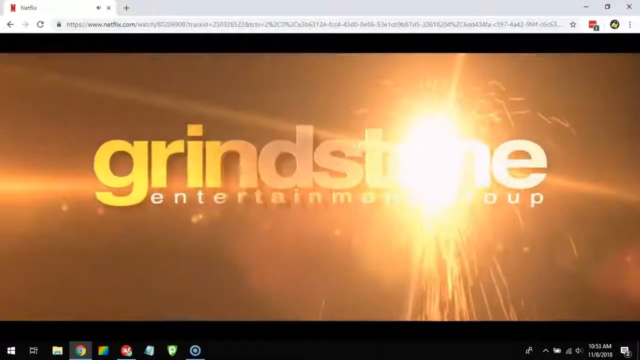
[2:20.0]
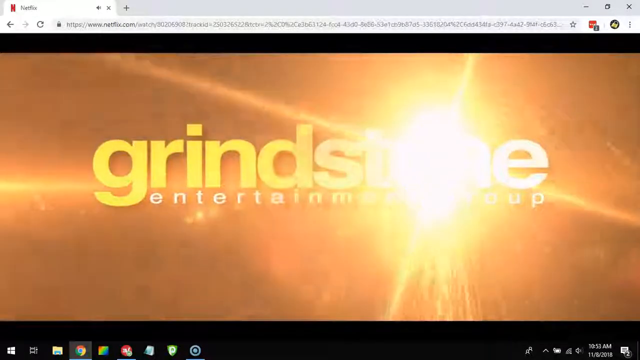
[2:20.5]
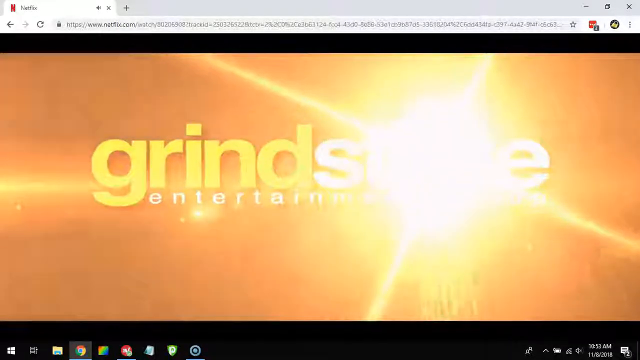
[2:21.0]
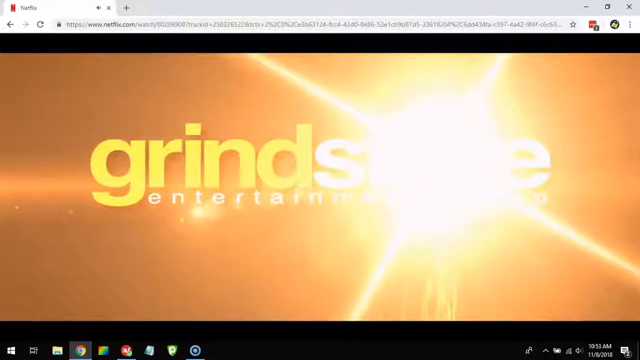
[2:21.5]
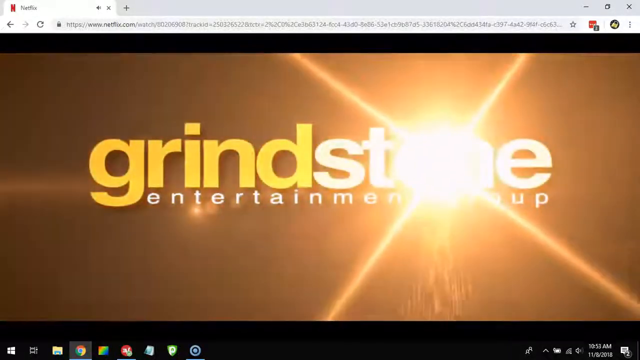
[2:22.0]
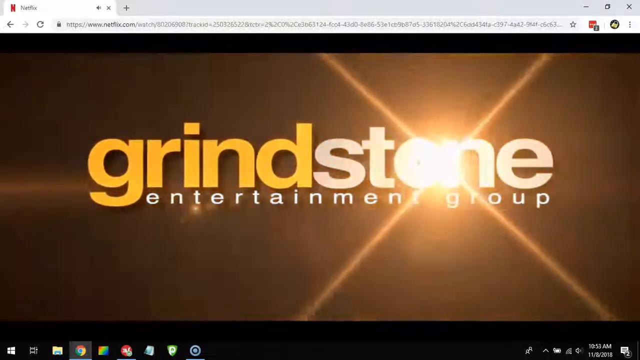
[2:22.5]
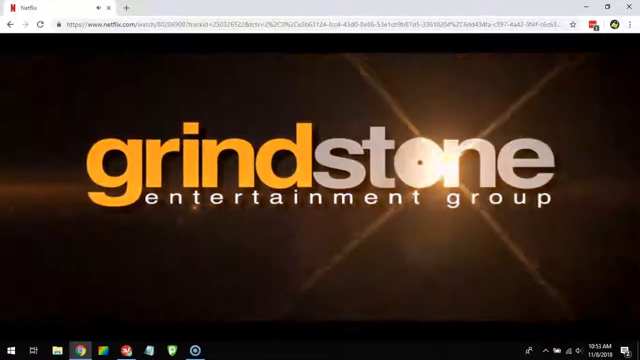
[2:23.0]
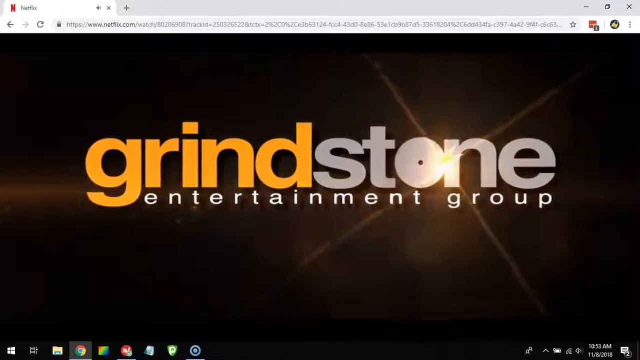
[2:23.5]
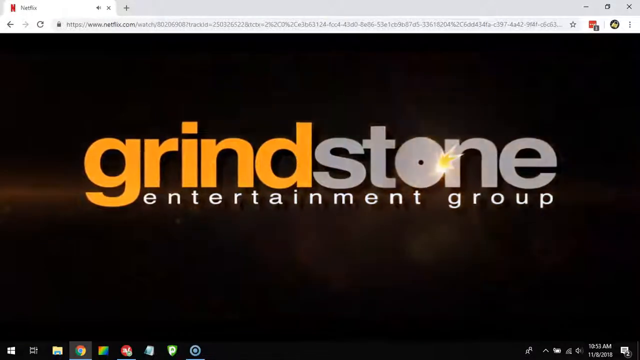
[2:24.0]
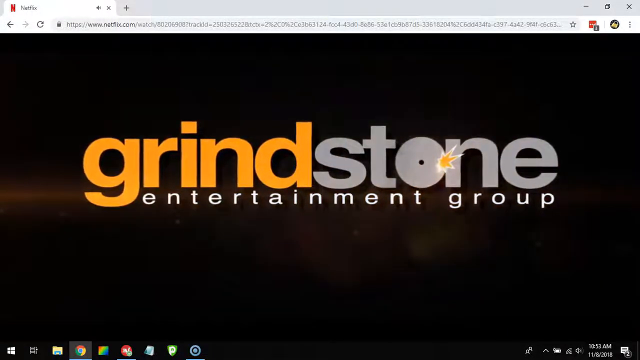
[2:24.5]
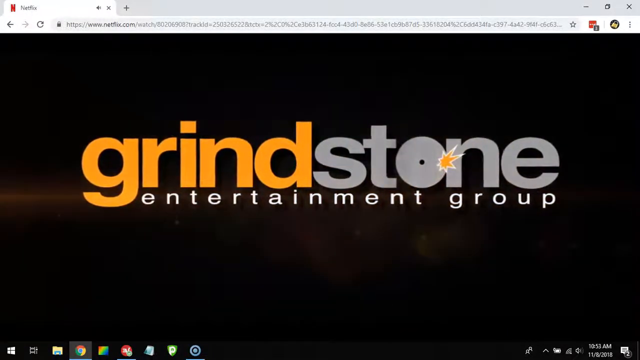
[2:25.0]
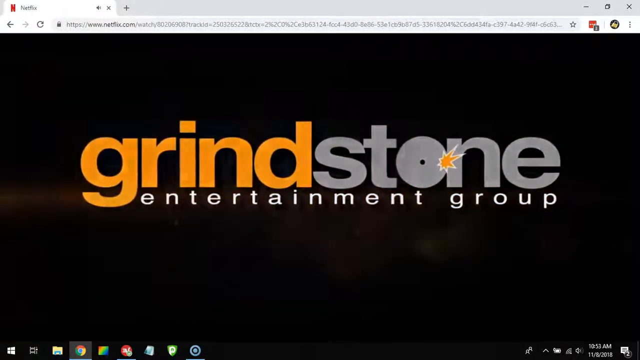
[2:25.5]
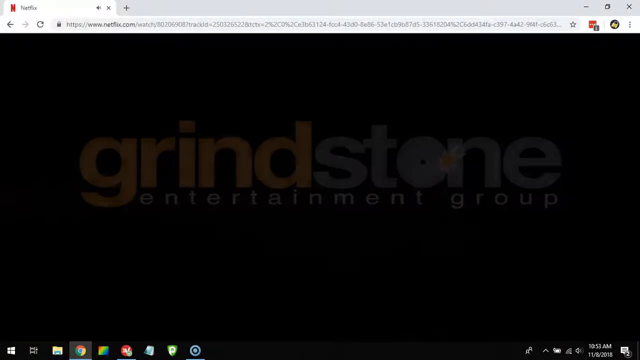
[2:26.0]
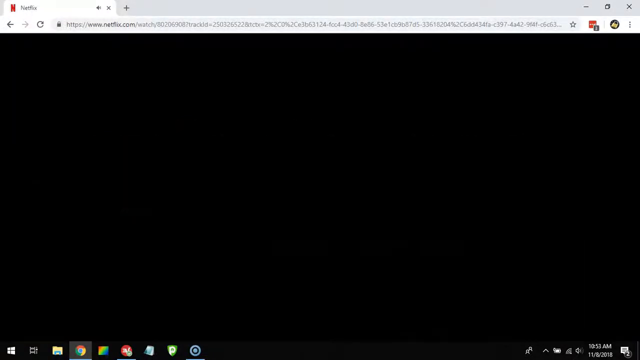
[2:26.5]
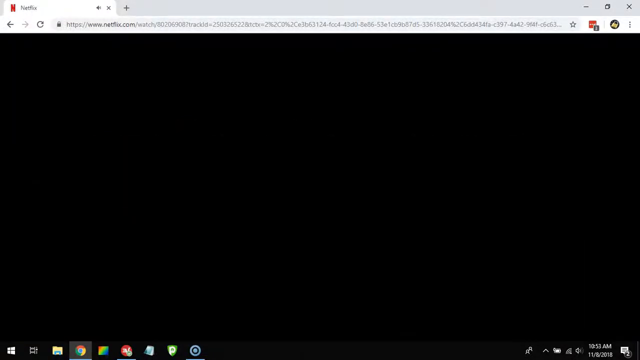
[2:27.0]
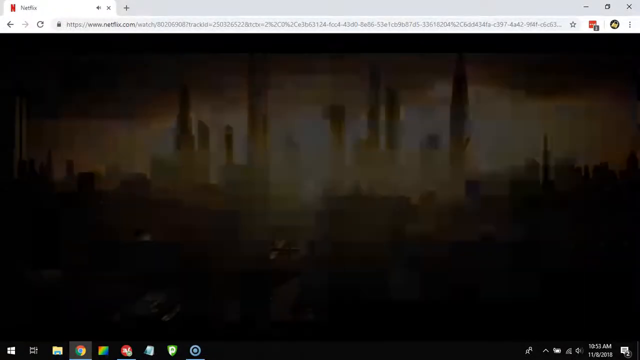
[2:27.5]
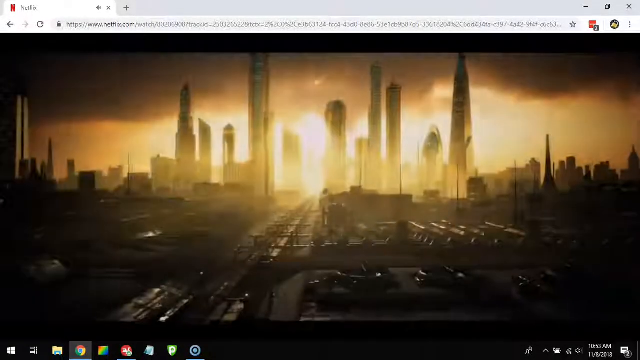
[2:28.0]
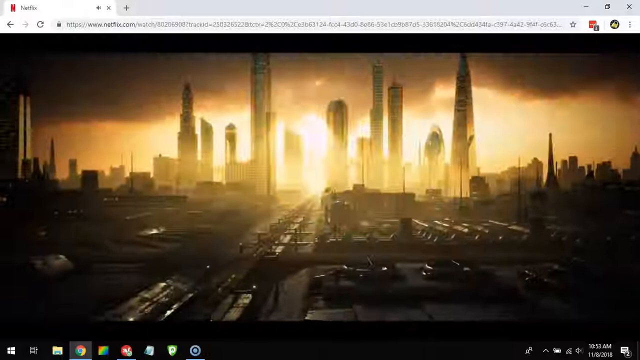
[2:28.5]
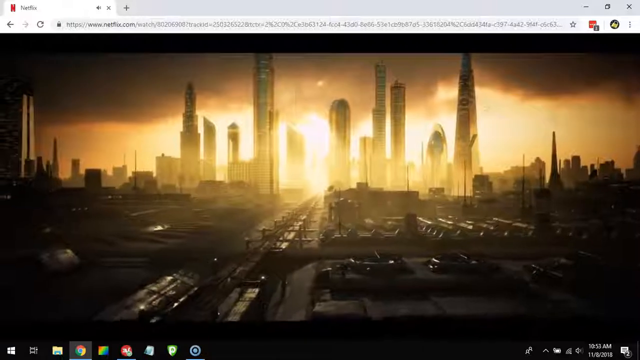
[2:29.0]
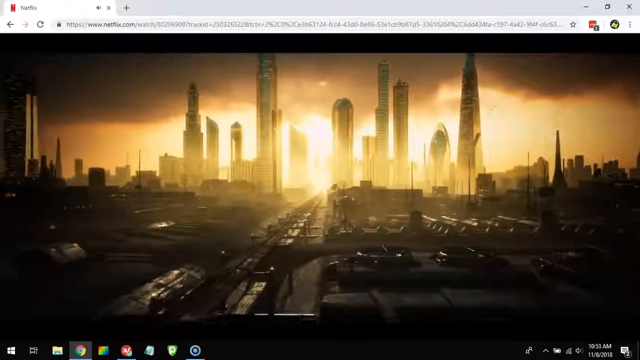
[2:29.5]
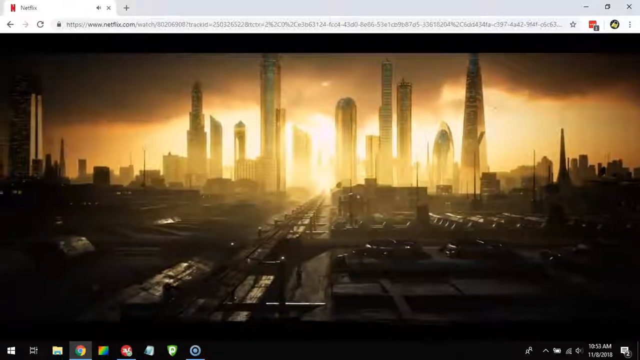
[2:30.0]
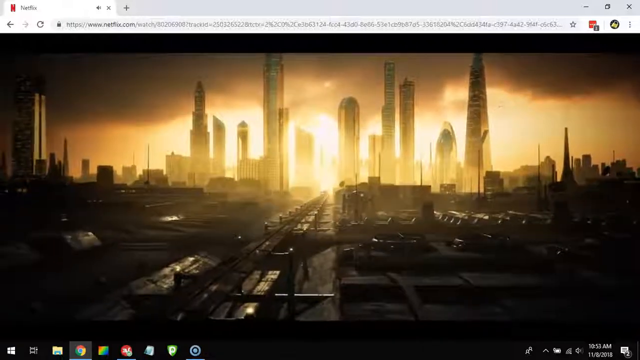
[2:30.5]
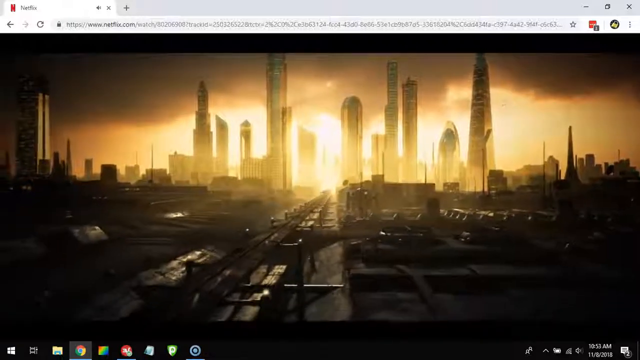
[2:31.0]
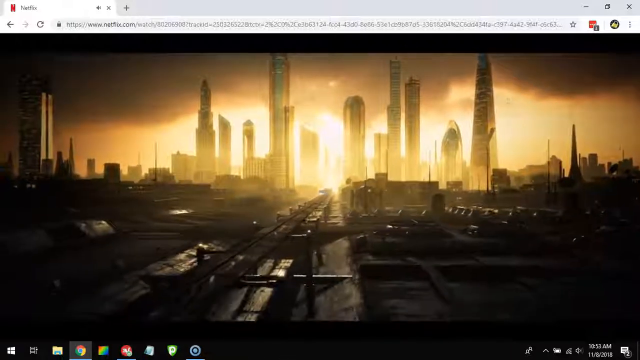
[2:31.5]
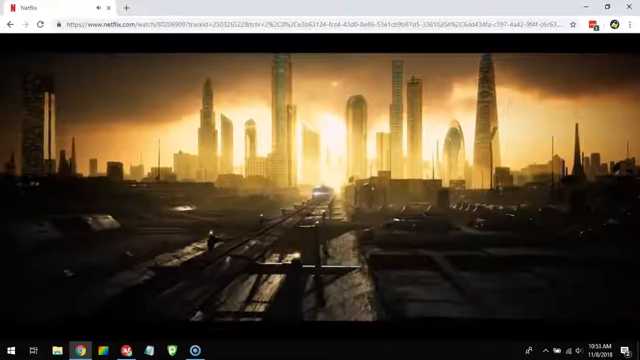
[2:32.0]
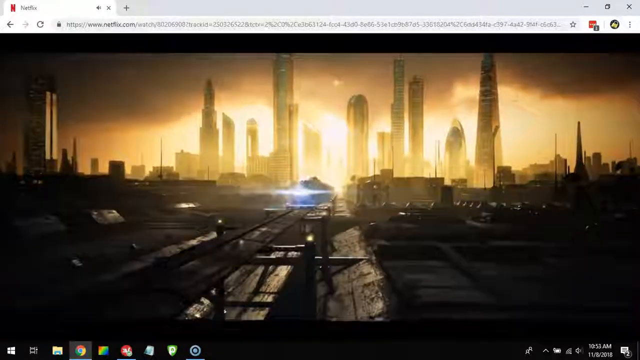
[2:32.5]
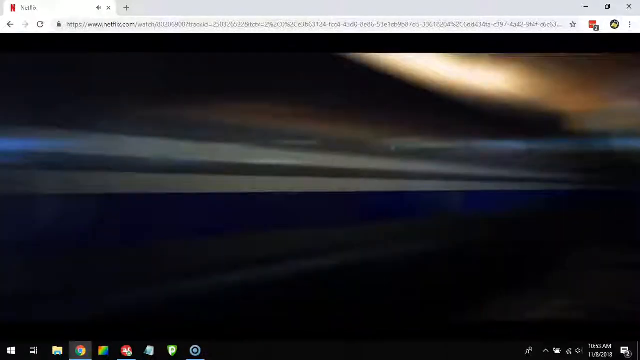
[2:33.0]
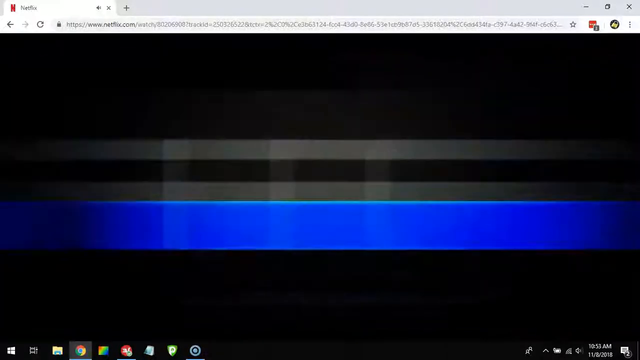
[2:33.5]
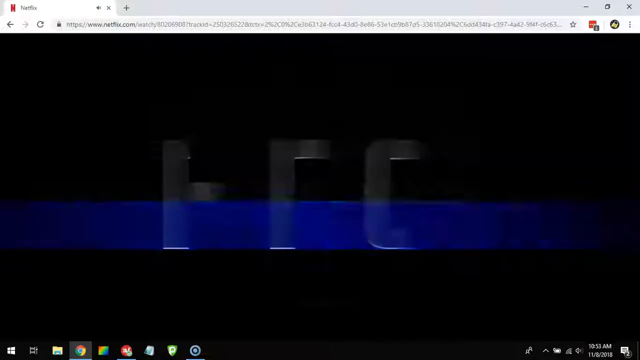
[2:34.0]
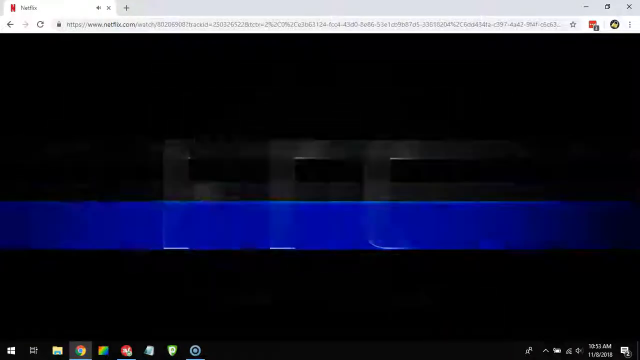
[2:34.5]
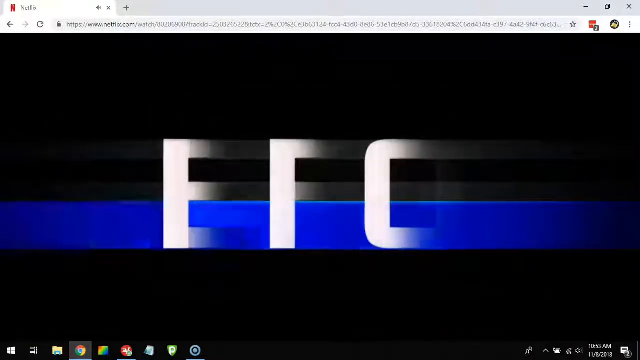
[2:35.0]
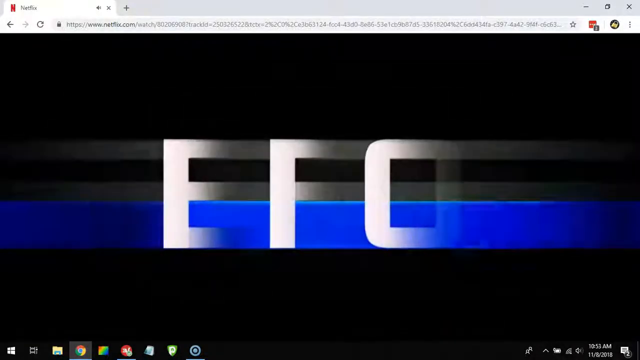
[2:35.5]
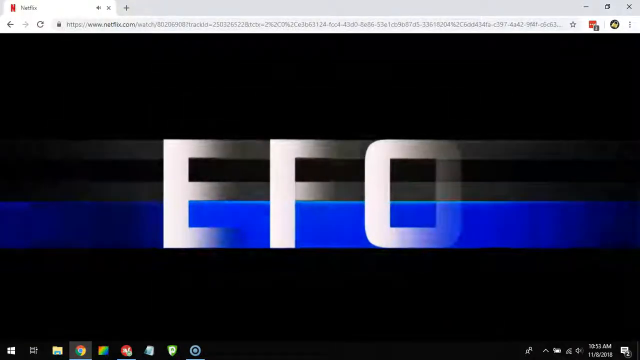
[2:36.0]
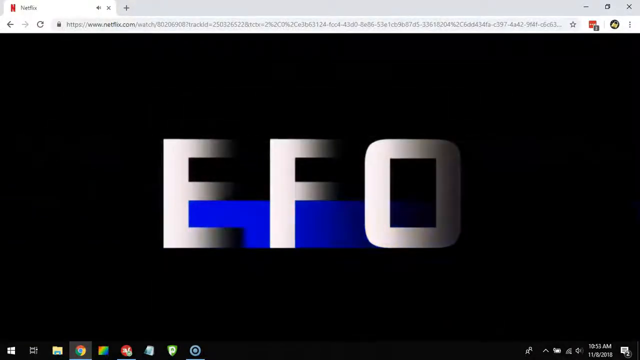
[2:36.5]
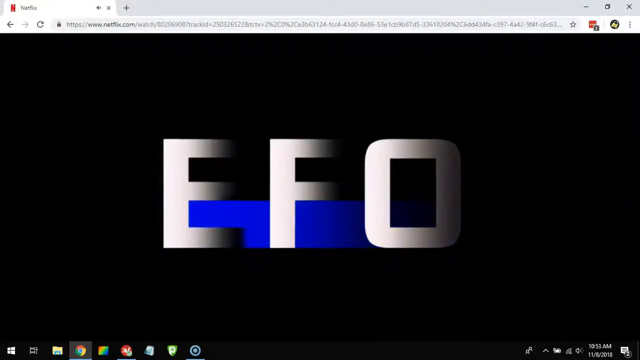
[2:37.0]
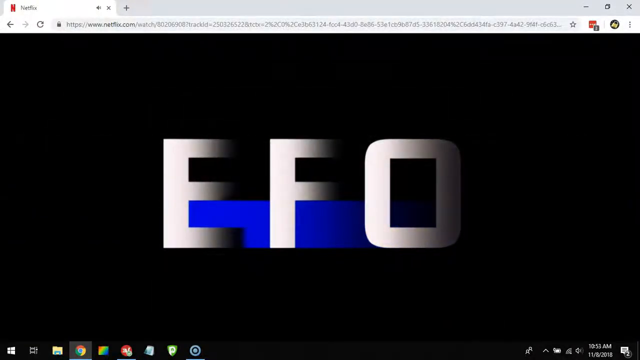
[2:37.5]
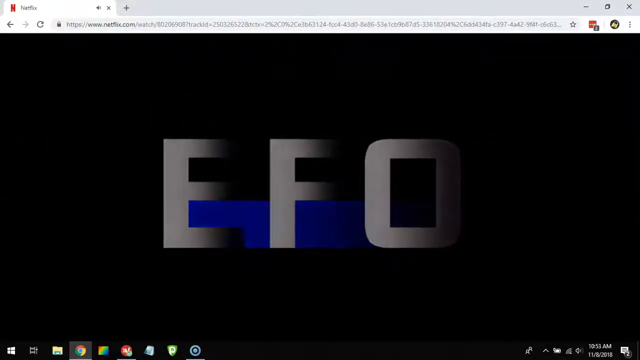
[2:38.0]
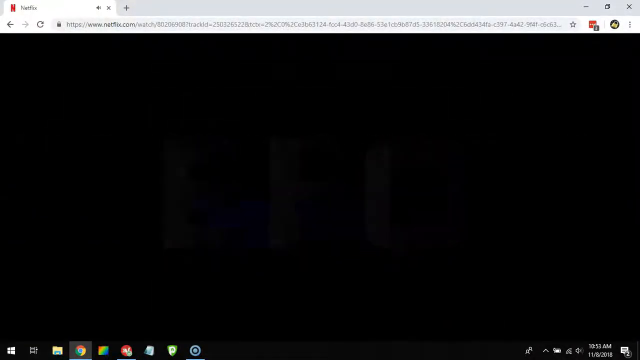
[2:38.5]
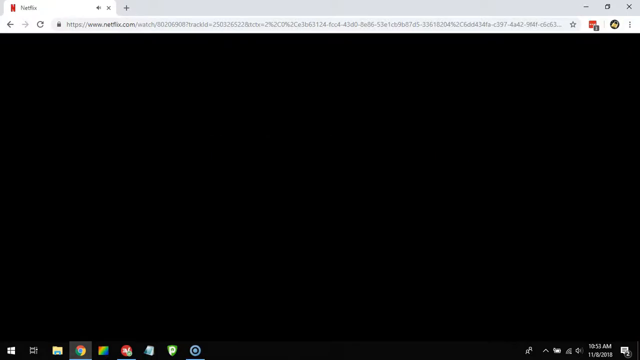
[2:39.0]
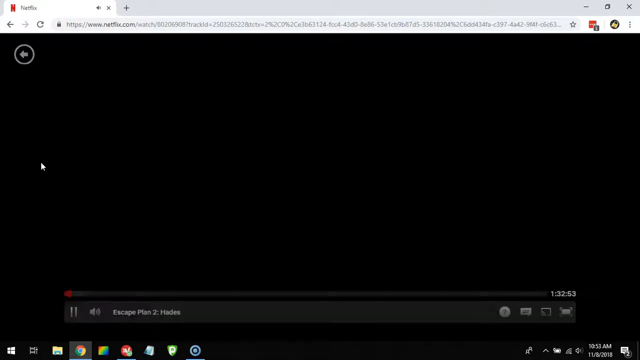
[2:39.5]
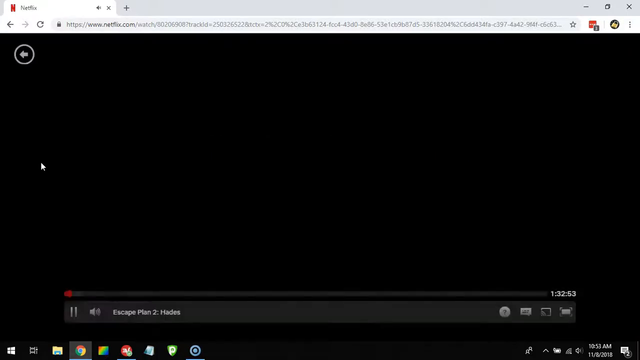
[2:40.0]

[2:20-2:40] In the Grindstone logo, the O, like a grinding wheel, touches and grinds against the N; once the sparks die down, what is behind them becomes visible. "Grindstone Entertainment Group" fades to black. Another company's logo follows, set in a futuristic city where a train speeds down a track; the camera turns to watch it pass, and letters form as the logo comes up, reading "EFO." It fades to black, and the movie seems about to start, with the time bar visible at the bottom, red at the very beginning, along with other options.